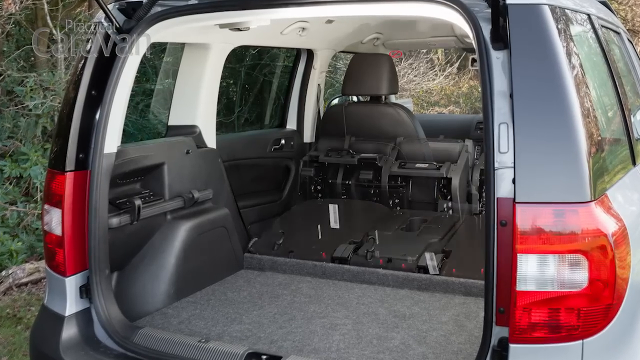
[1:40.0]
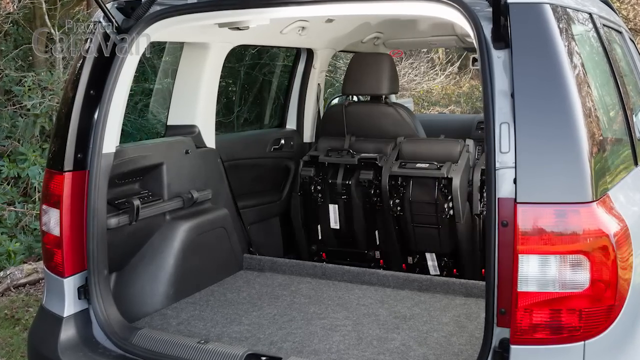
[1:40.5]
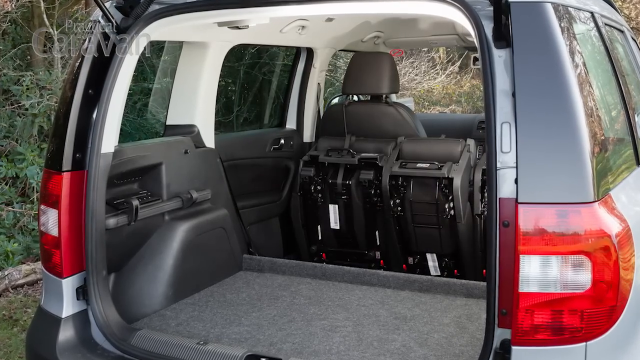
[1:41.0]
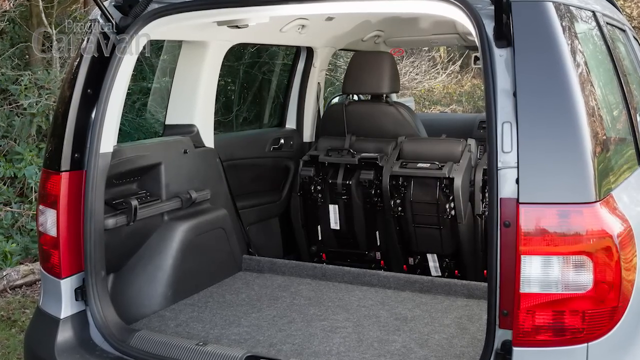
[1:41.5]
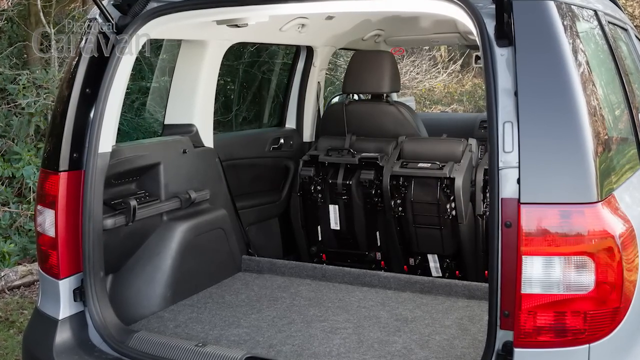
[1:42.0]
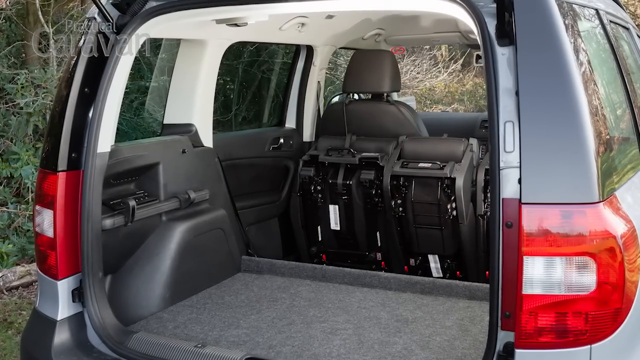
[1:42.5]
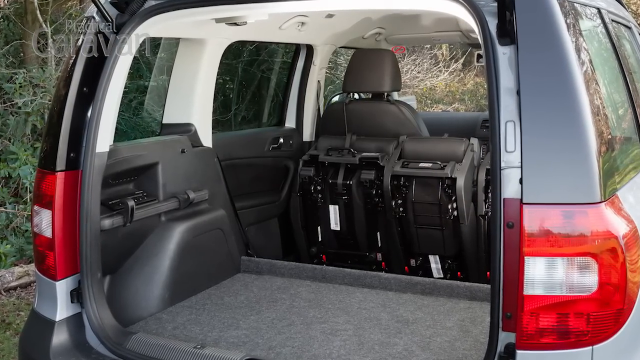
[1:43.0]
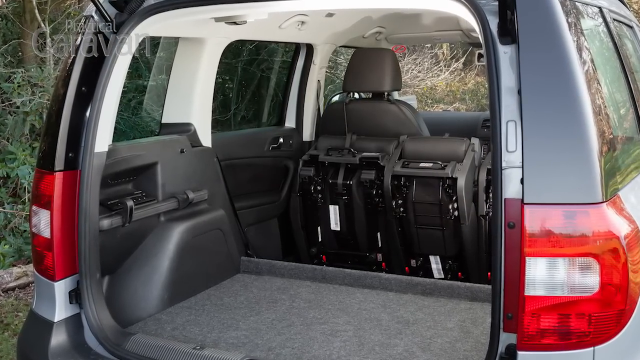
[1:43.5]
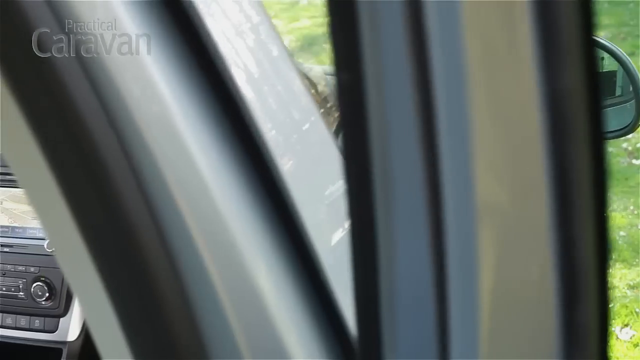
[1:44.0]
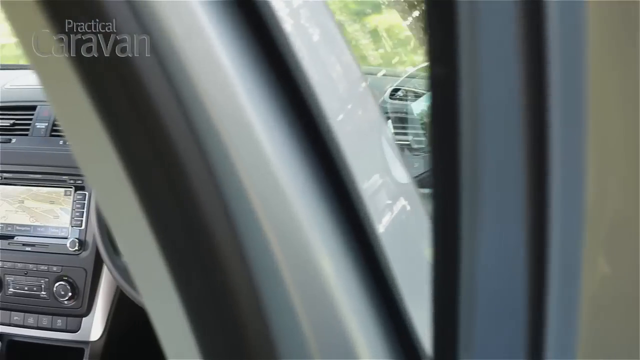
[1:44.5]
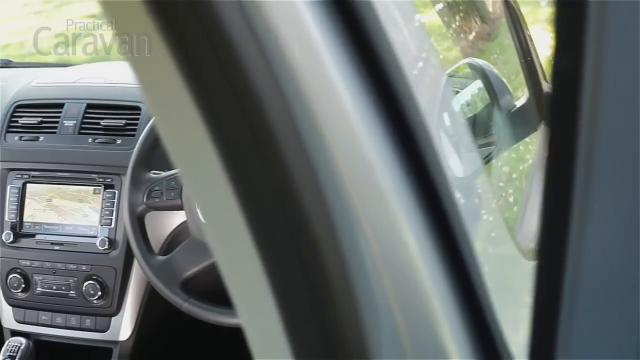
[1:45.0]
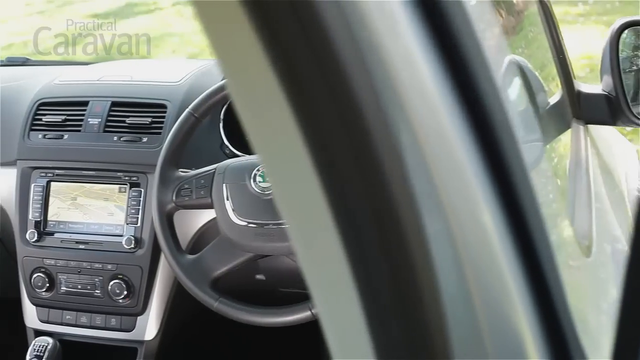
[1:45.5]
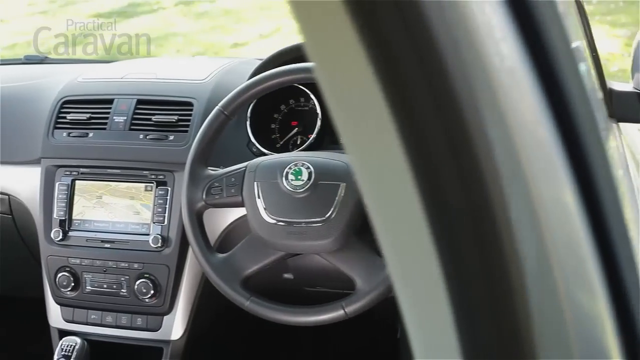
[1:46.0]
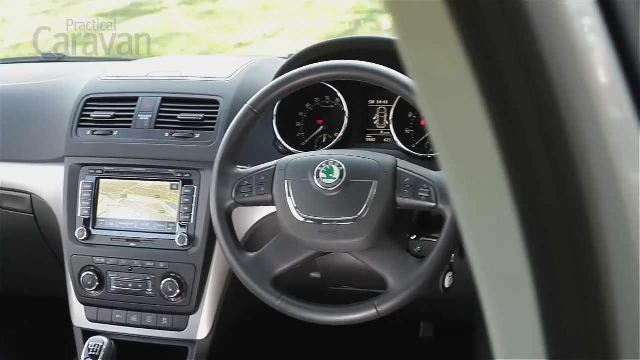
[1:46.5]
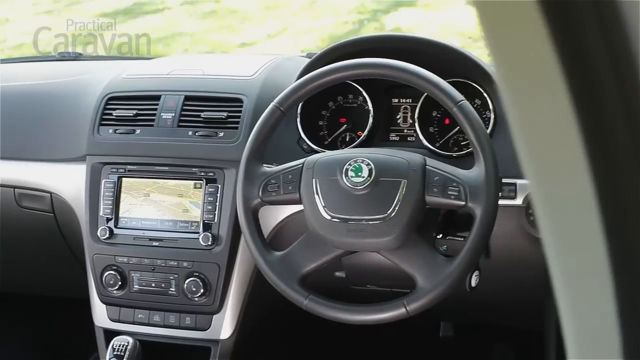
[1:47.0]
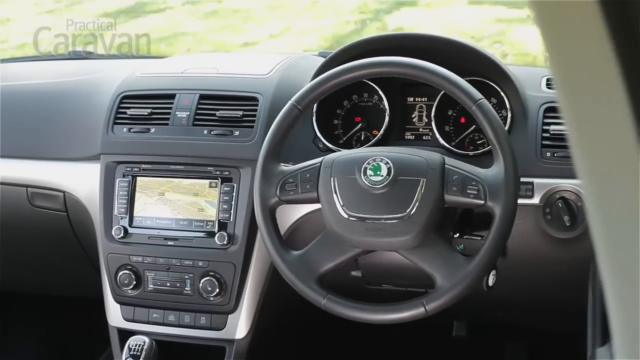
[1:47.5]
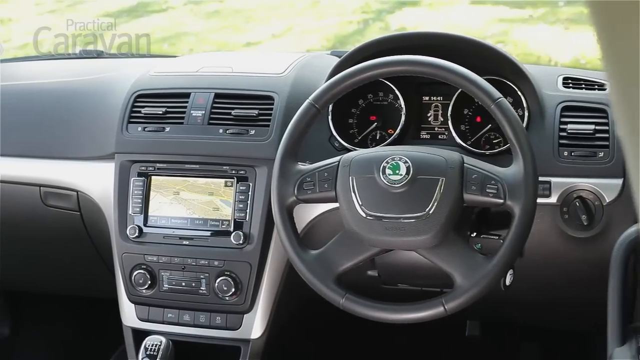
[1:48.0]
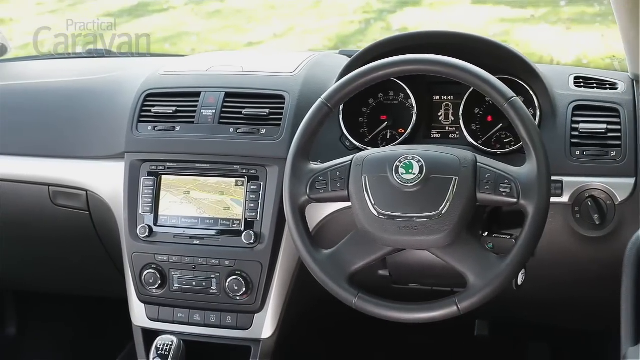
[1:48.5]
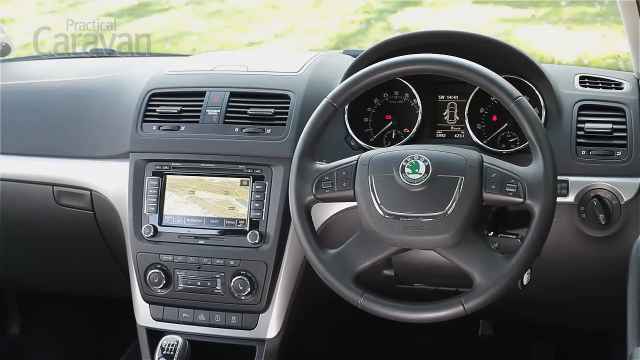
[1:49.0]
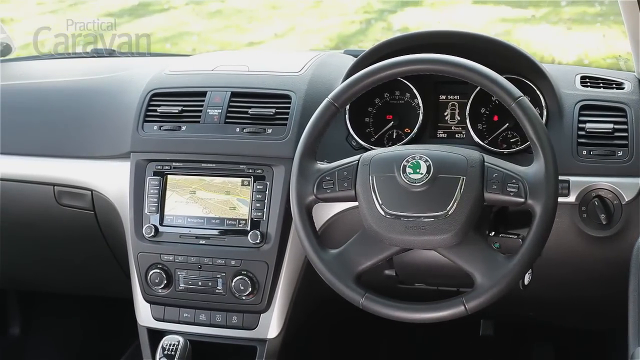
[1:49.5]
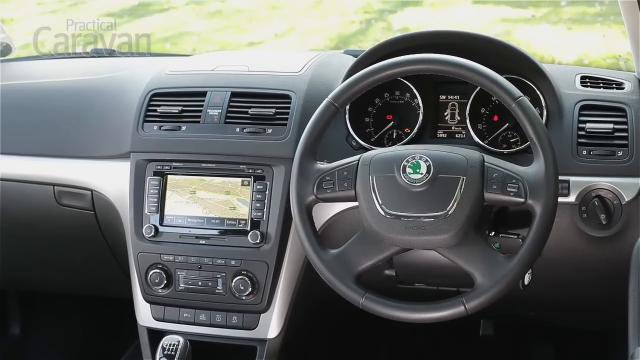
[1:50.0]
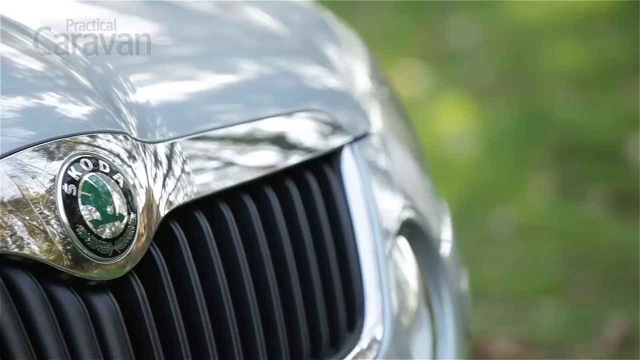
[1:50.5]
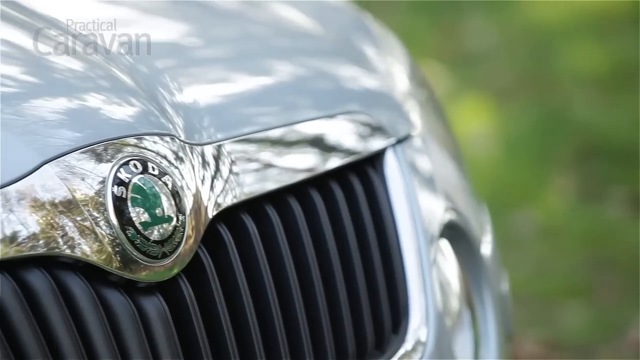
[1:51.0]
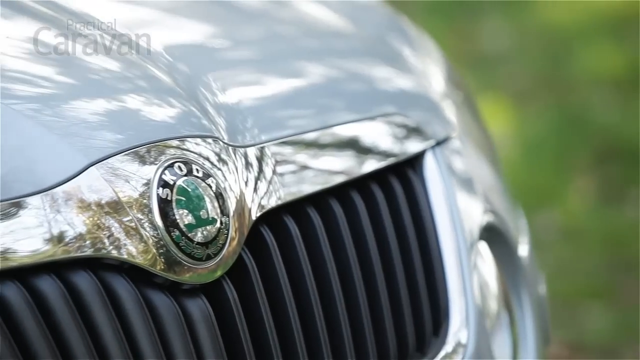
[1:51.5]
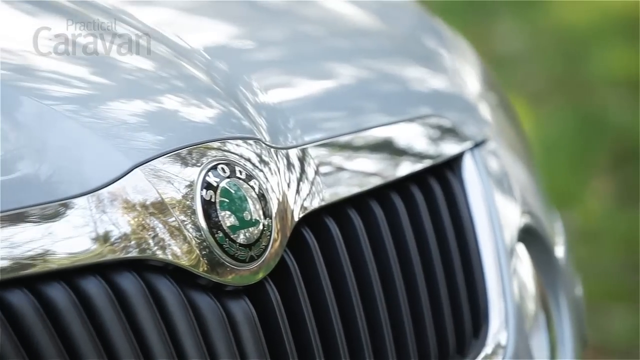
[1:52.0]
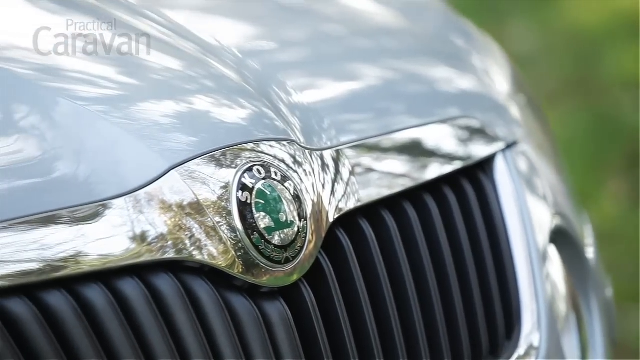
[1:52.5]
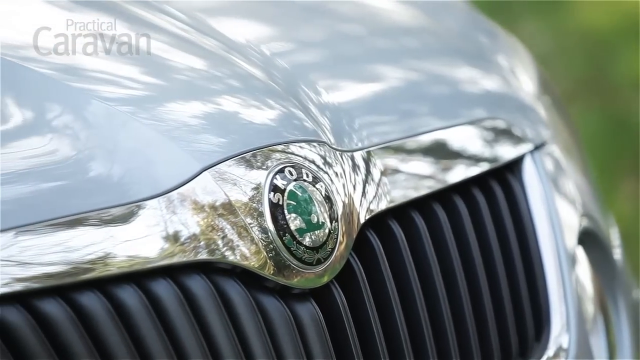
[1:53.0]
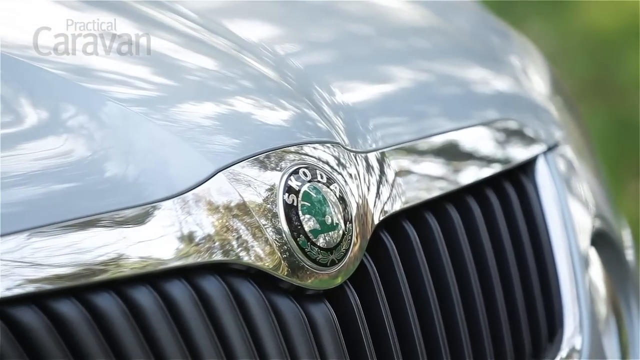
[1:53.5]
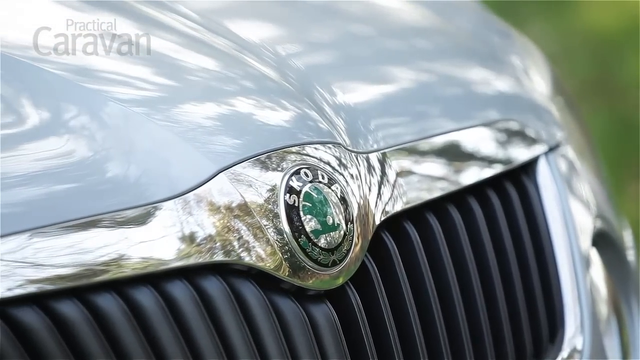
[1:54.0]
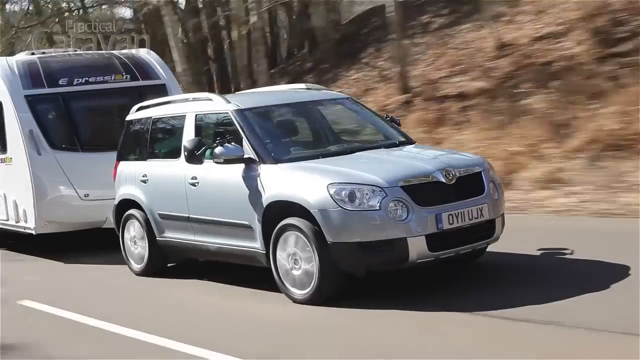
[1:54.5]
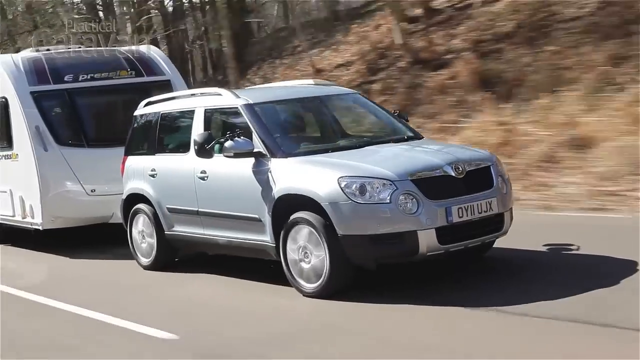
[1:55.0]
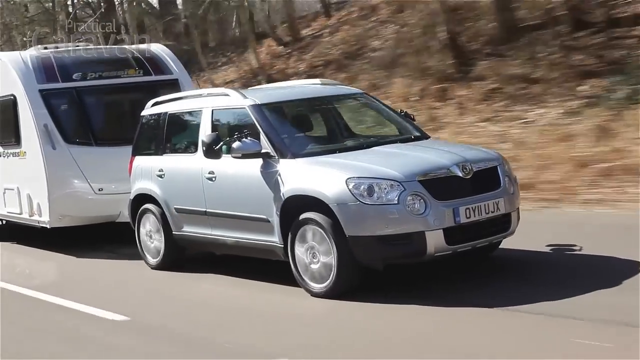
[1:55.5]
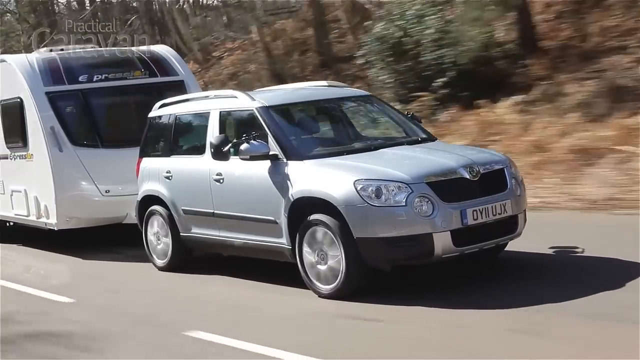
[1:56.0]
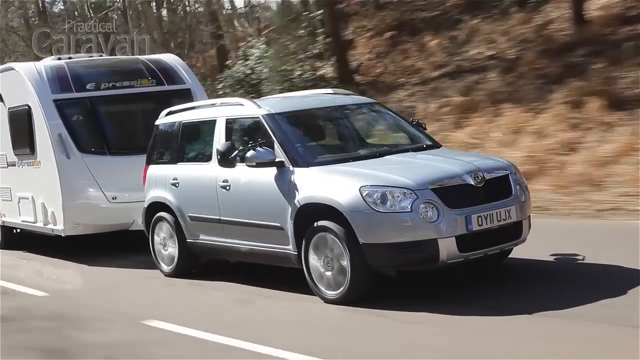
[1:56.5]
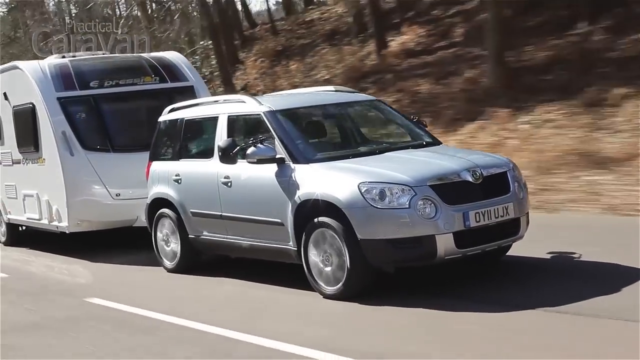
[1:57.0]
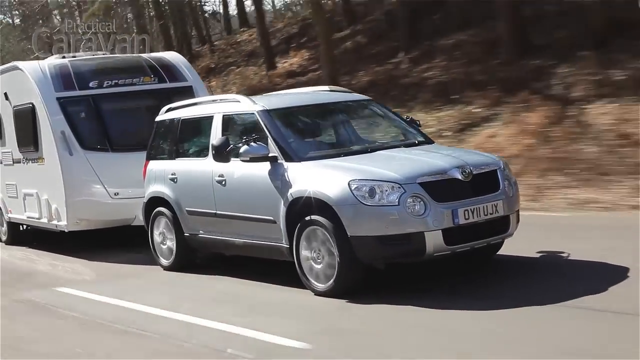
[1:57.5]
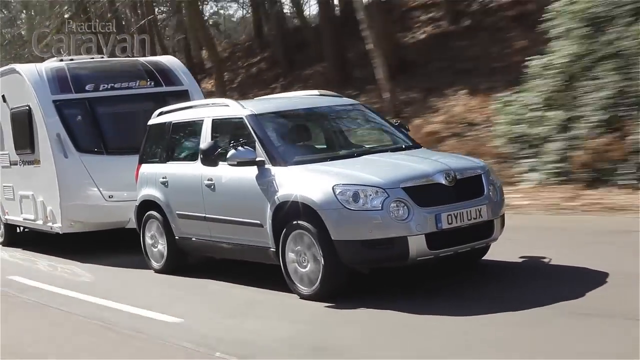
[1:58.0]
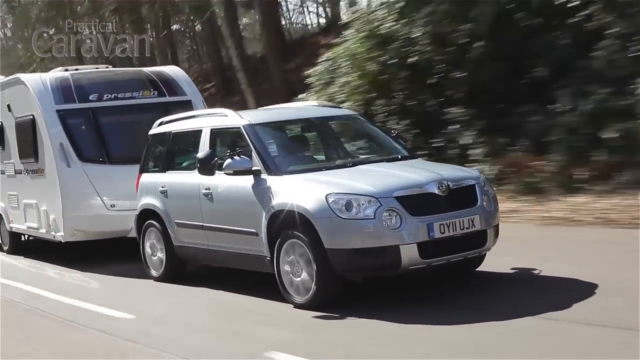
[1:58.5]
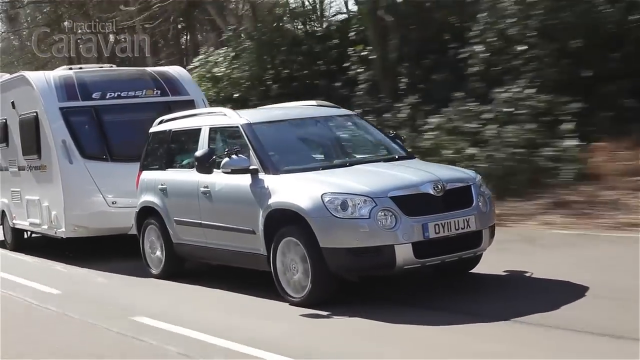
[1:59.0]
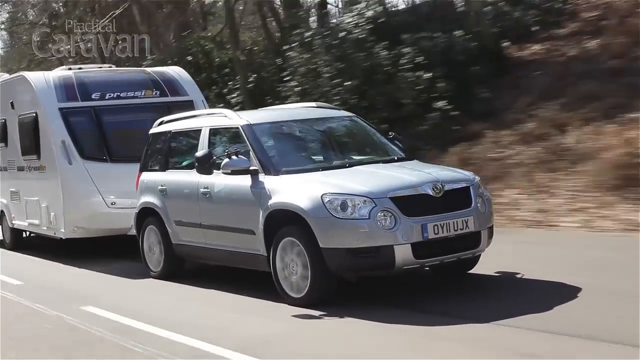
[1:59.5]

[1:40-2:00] Inside the back of the car, the seats are folded down for more trunk space. The camera slowly moves from outside the car window to the inside, showing the steering wheel and the dashboard, which has a screen in the middle, apparently for navigation, and holds there for a second. Next, the front grill is shown from an angle with the Skoda emblem on the front of the car. The car is then shown again from a side angle driving along the road with the trailer pulled behind it, its wheels moving. It is outdoors, with nature on either side of the road rather than a highway; the car drives through a forest on a cement road.